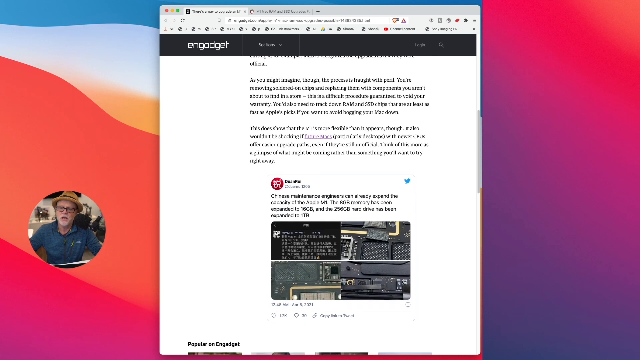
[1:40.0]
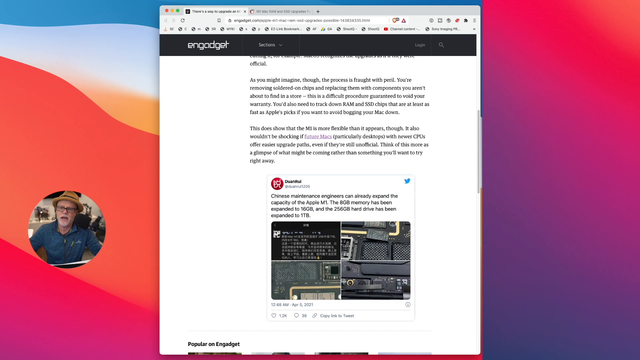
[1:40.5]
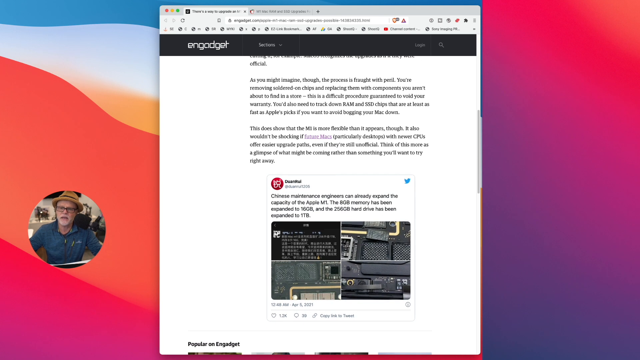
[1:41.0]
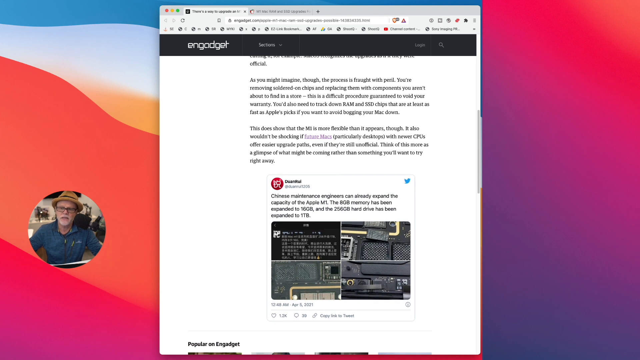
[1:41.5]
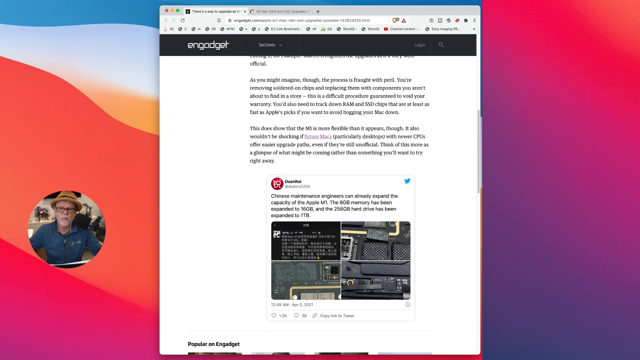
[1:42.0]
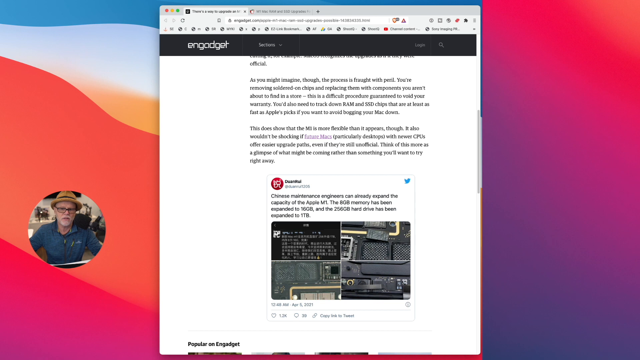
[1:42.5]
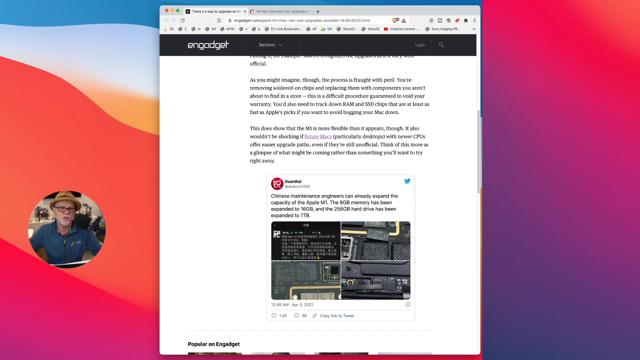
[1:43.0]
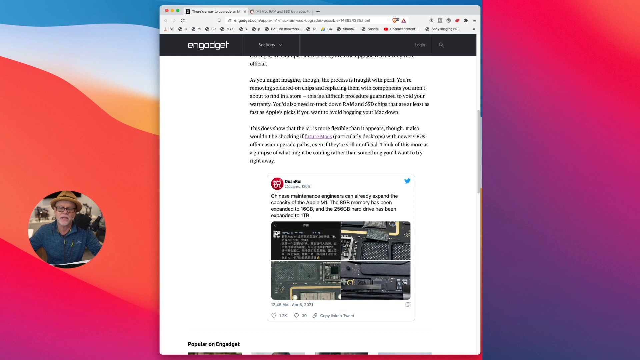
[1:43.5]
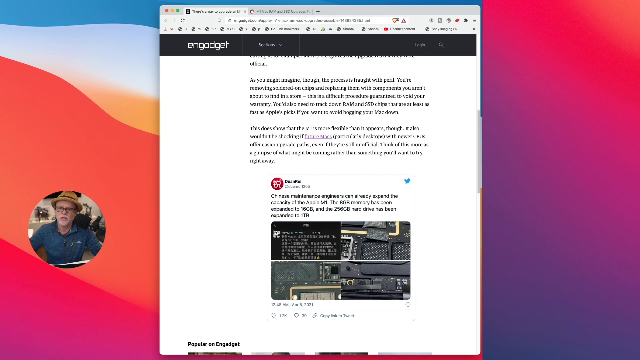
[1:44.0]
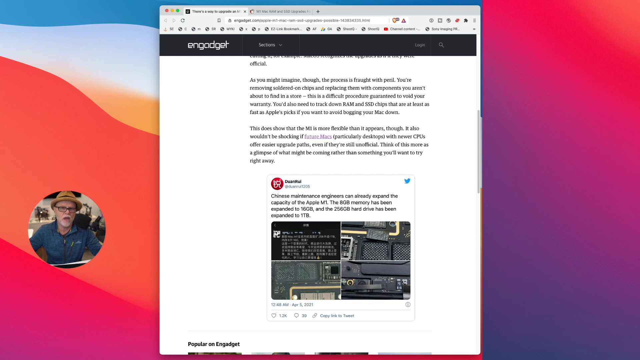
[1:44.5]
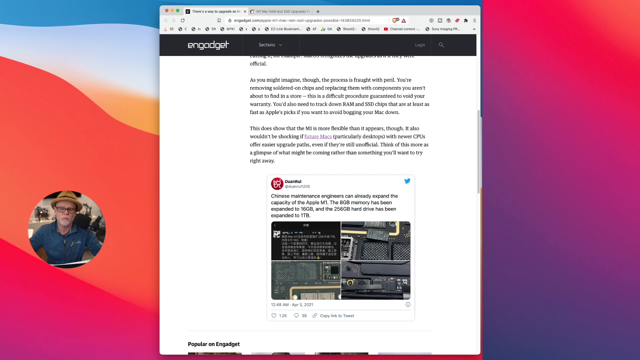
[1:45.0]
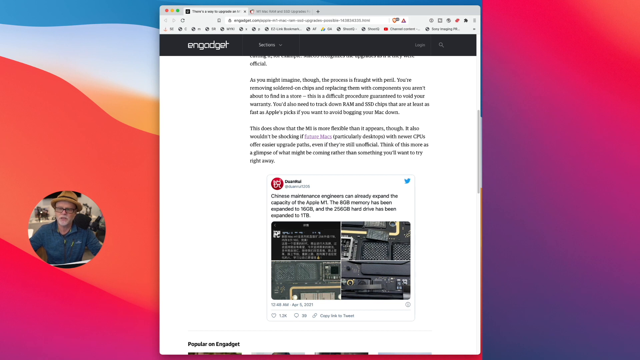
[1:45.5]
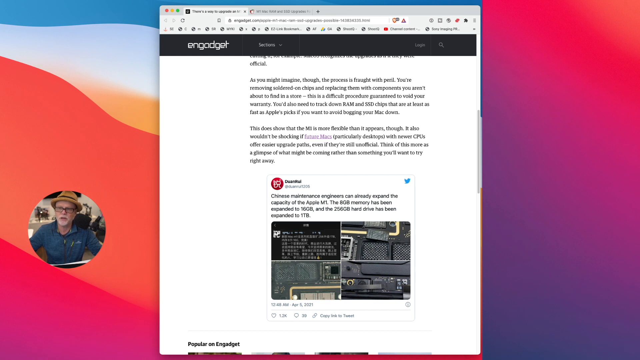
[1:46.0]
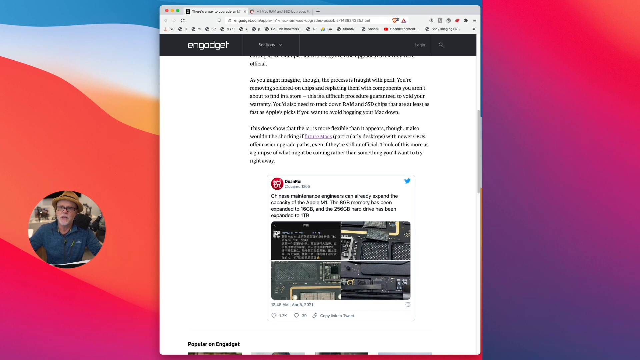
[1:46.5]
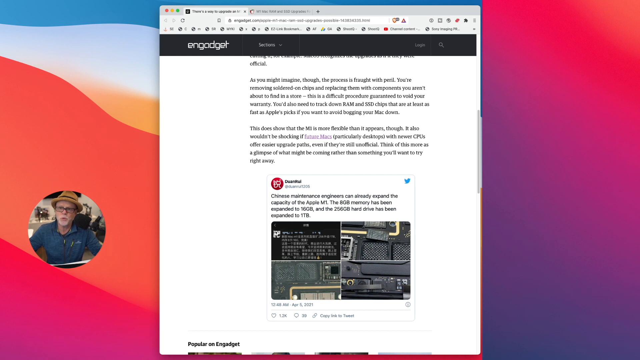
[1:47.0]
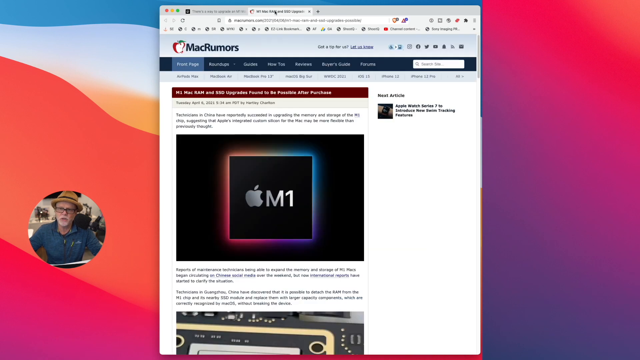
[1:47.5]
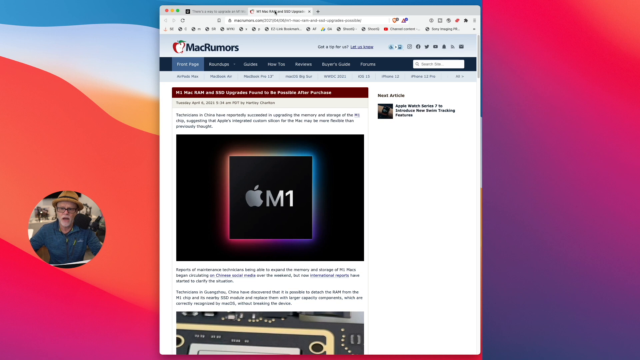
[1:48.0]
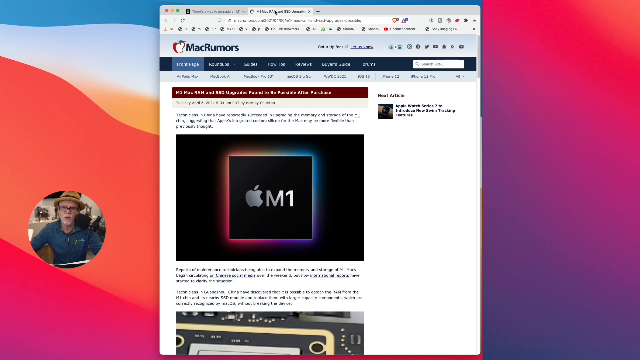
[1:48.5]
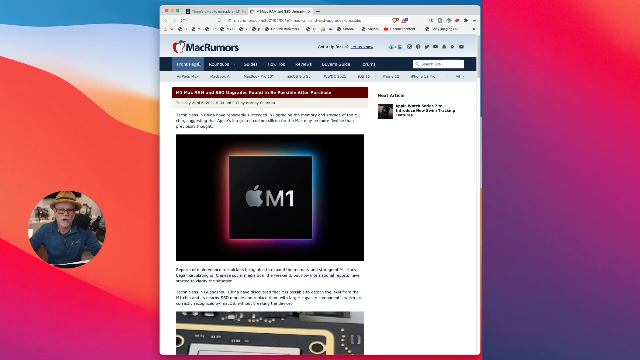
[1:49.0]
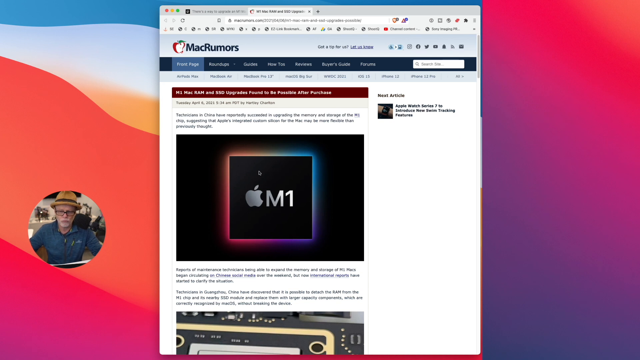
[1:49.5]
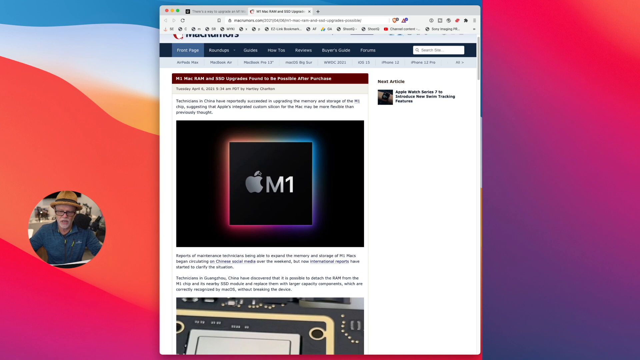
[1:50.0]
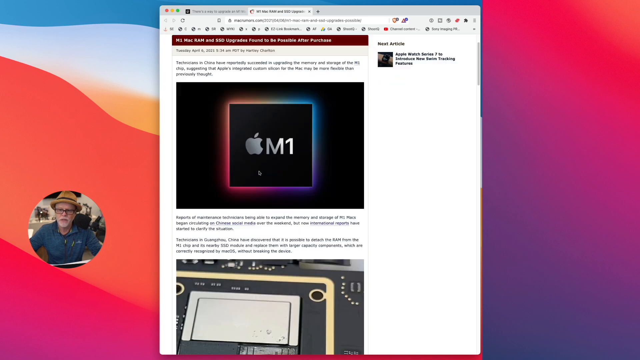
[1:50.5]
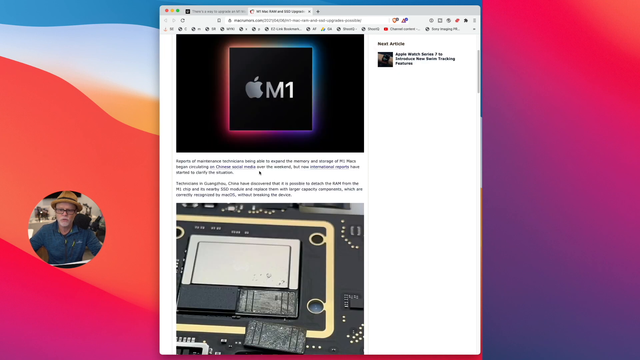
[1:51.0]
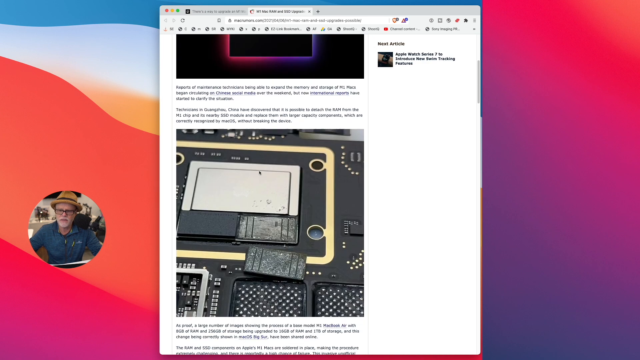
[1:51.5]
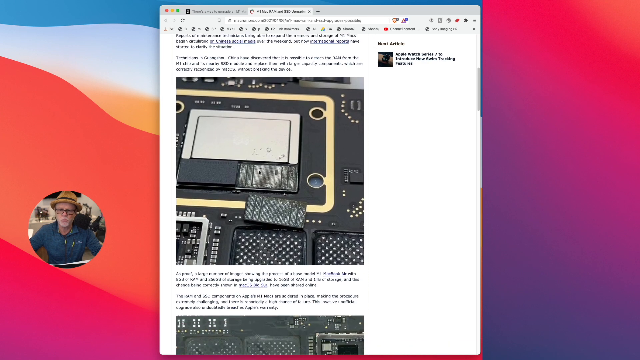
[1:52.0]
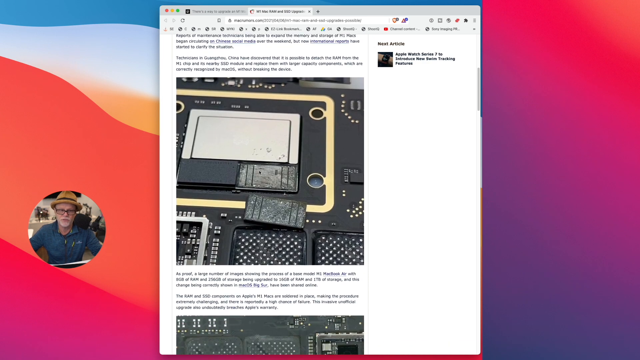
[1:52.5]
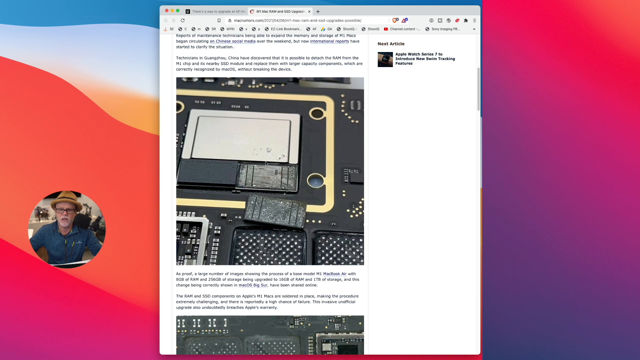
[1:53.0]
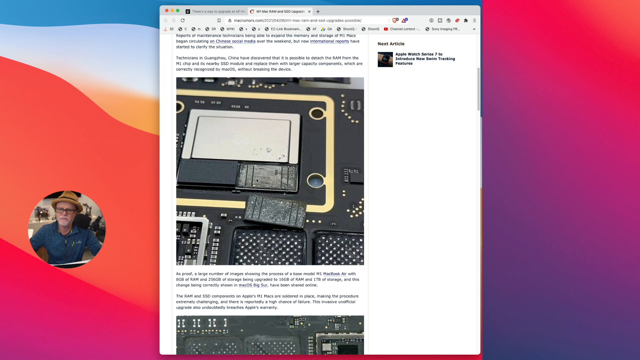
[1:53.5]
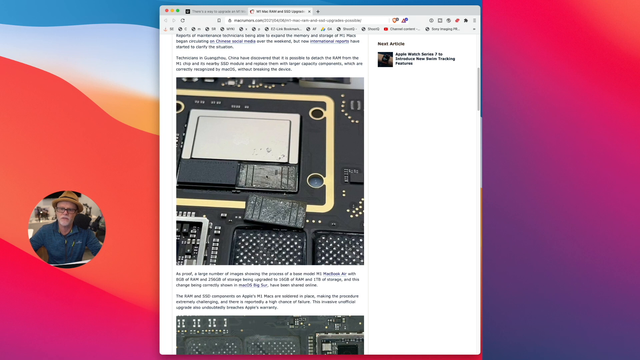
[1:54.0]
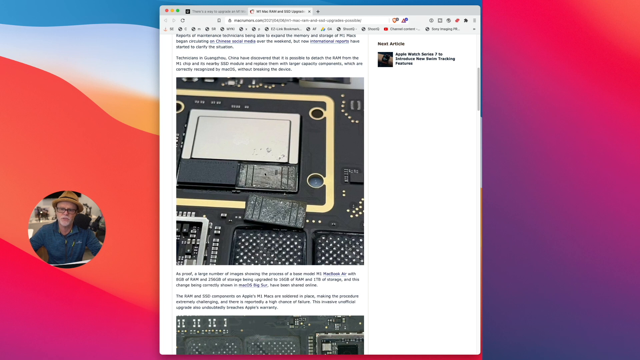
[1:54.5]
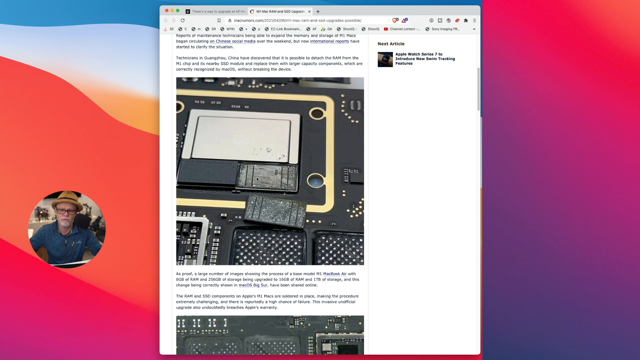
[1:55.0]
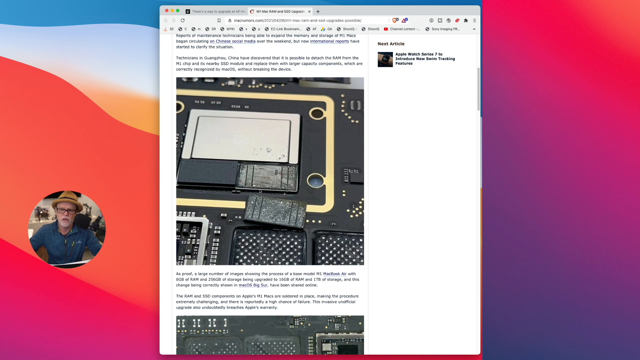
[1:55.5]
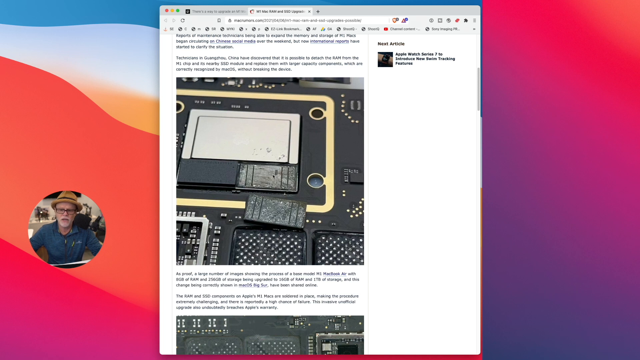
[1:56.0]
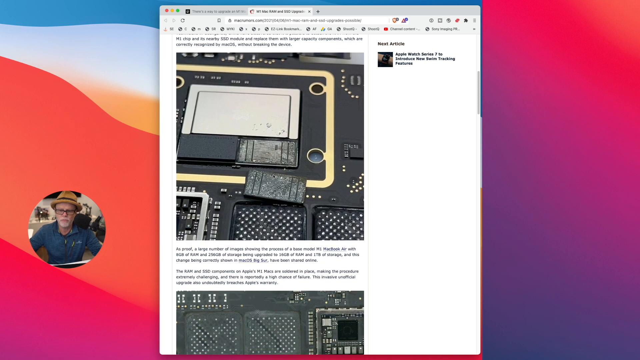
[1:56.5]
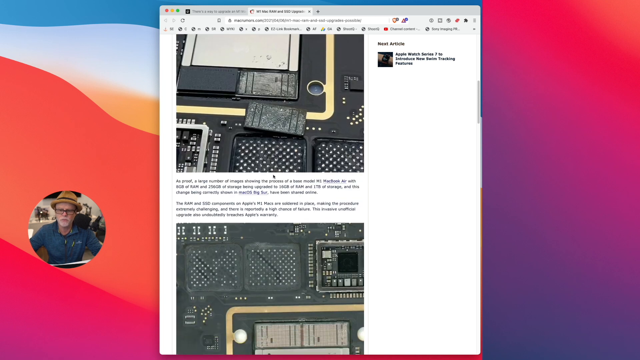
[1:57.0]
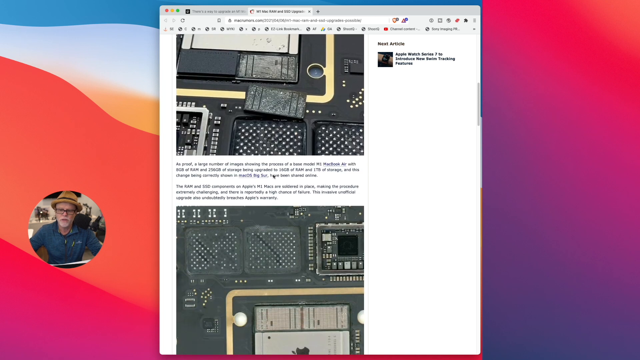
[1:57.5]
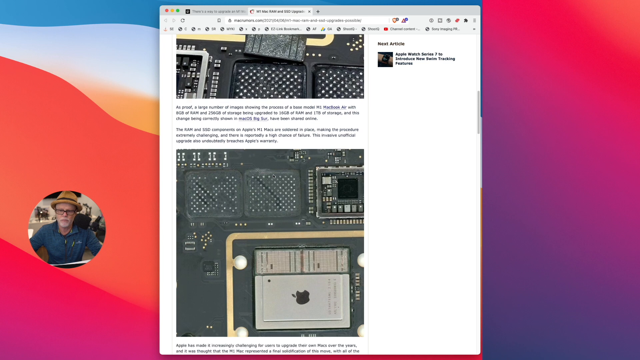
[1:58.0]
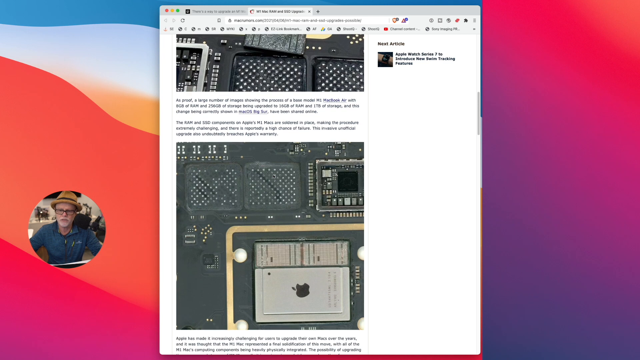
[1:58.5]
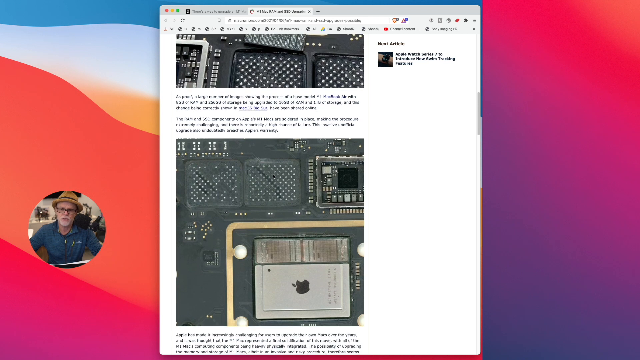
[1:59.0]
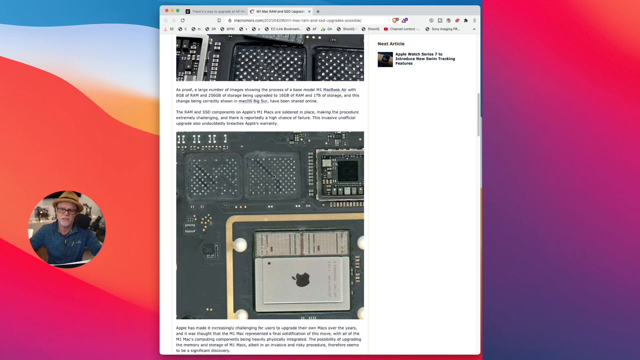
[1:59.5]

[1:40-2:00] The man is still shown in a small circle, his video minimized to share the page, and he is still talking. He still wears the caramel-brown hat with a darker strip around it. He goes to another link that looks like it says "Mac Rumors", showing an image that says "M1" with the Apple logo next to it. He then scrolls down to what looks like a computer taken apart, apparently resembling a motherboard.